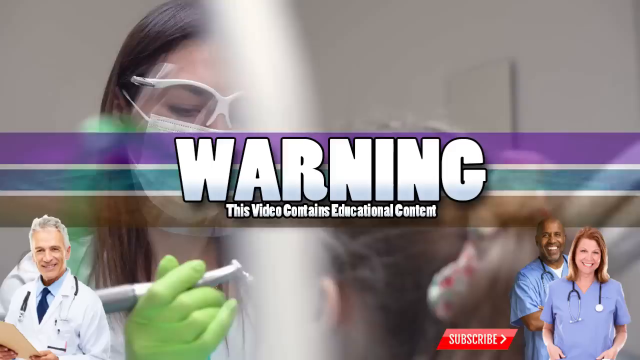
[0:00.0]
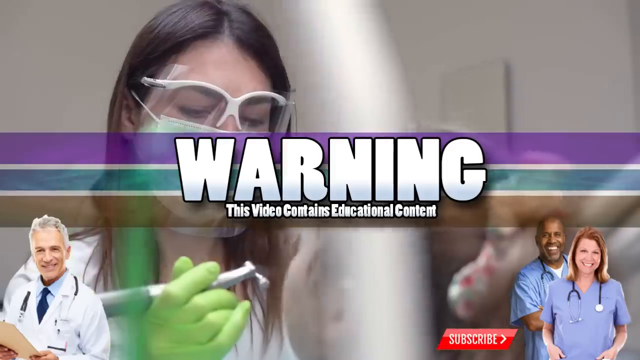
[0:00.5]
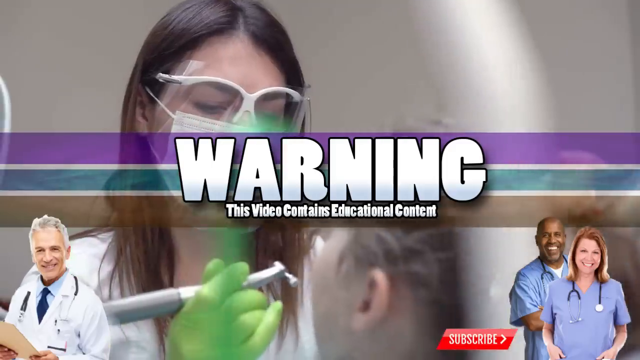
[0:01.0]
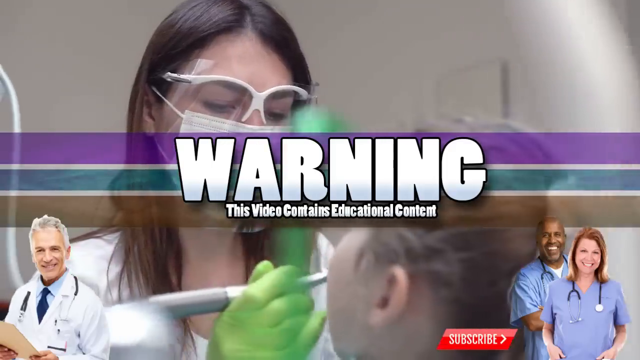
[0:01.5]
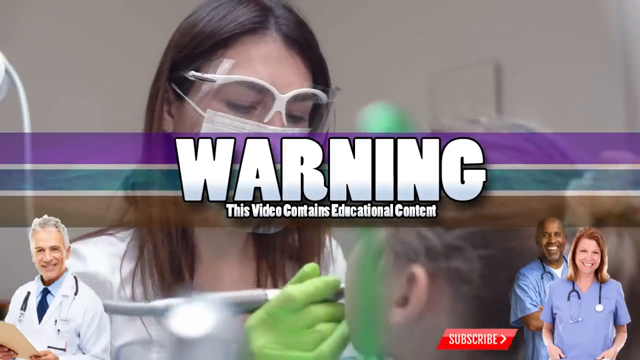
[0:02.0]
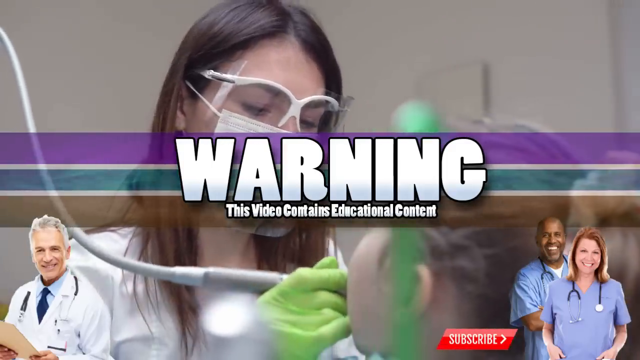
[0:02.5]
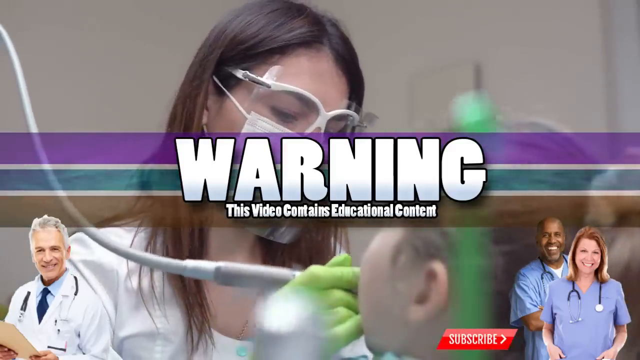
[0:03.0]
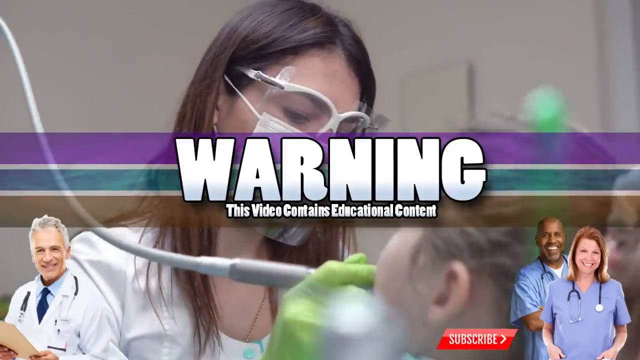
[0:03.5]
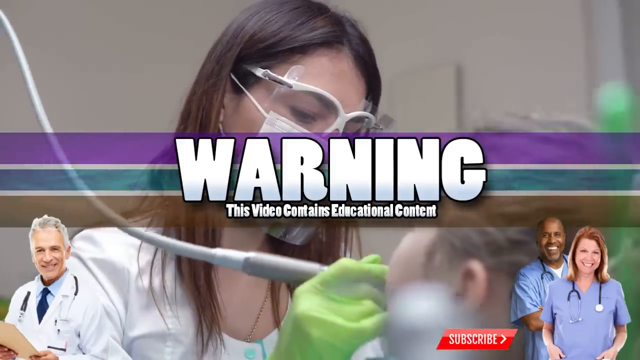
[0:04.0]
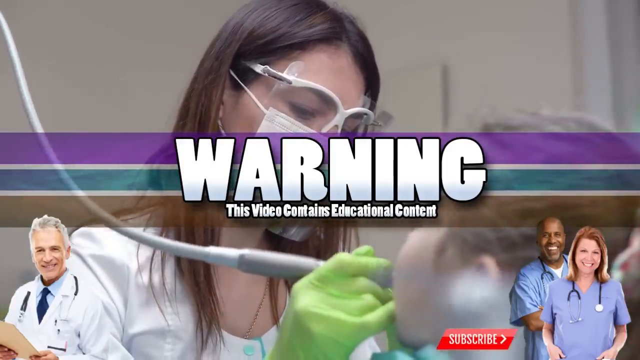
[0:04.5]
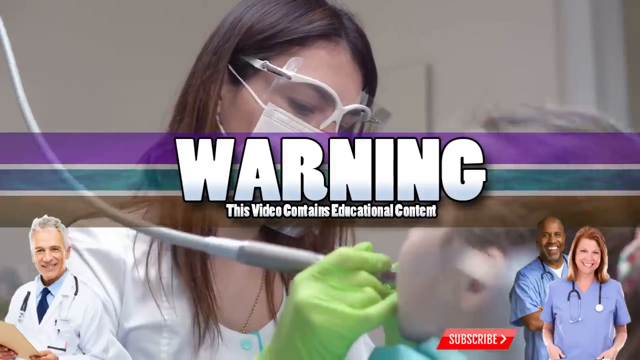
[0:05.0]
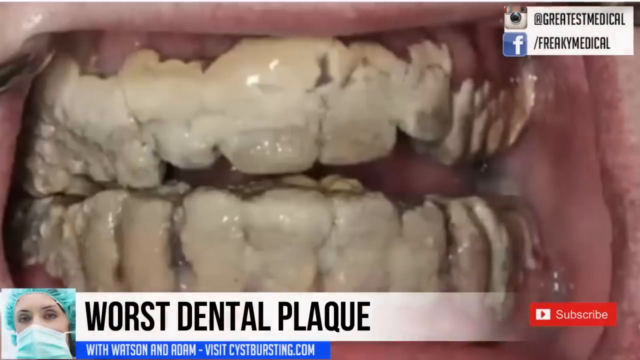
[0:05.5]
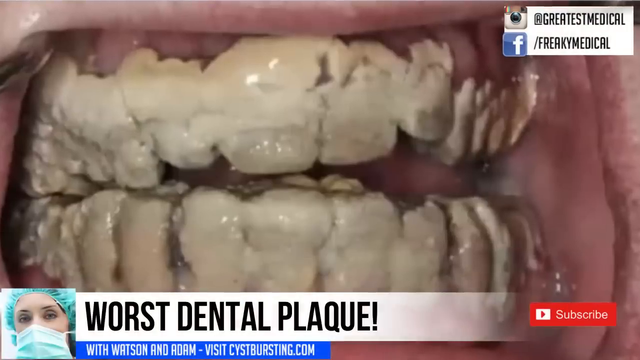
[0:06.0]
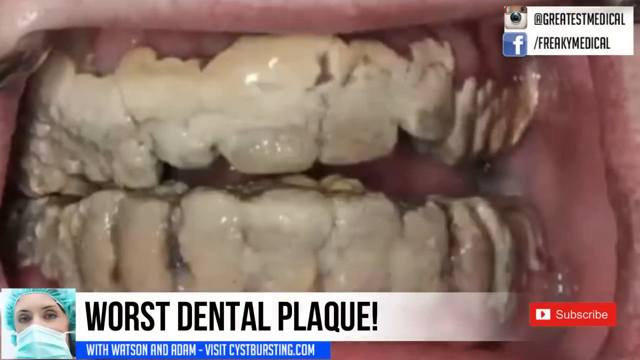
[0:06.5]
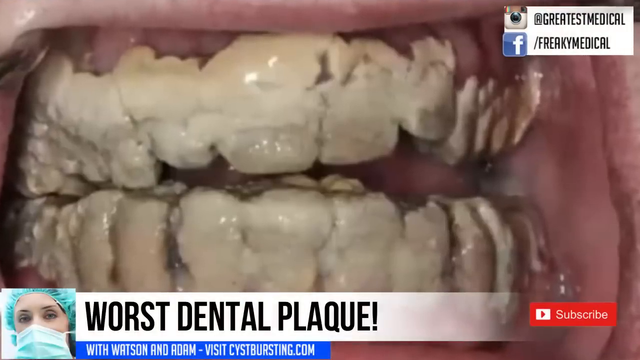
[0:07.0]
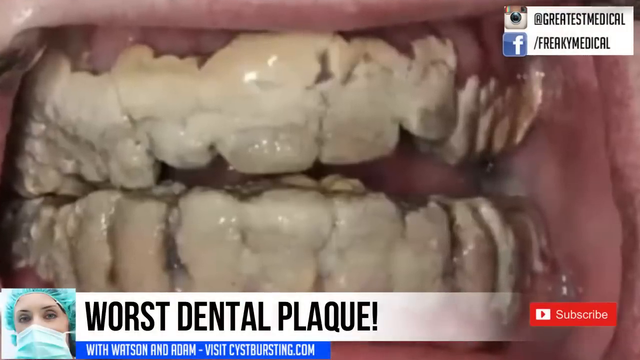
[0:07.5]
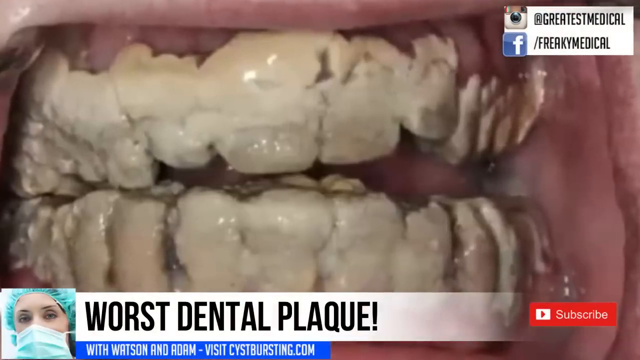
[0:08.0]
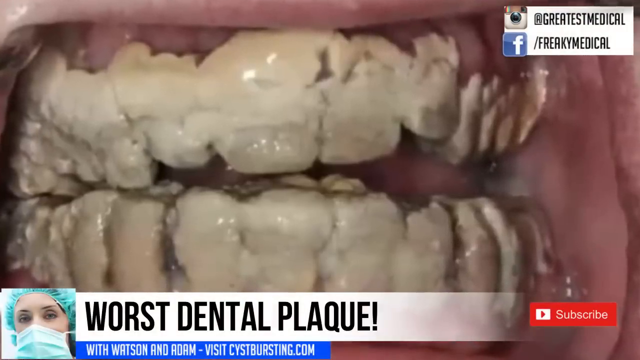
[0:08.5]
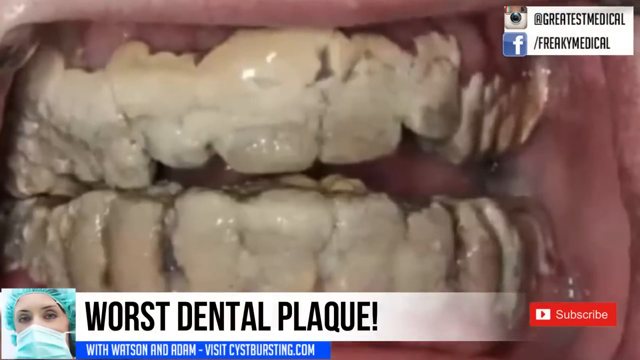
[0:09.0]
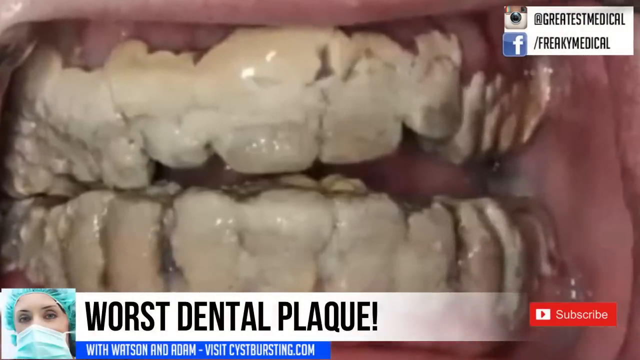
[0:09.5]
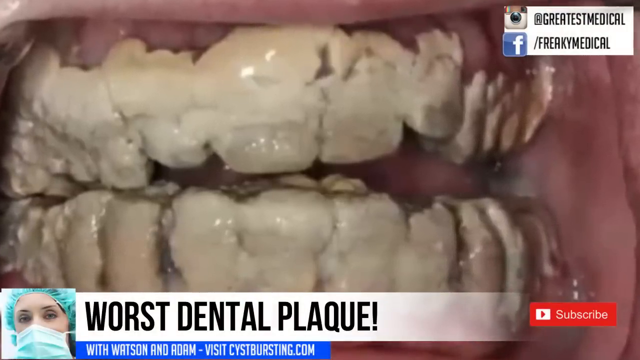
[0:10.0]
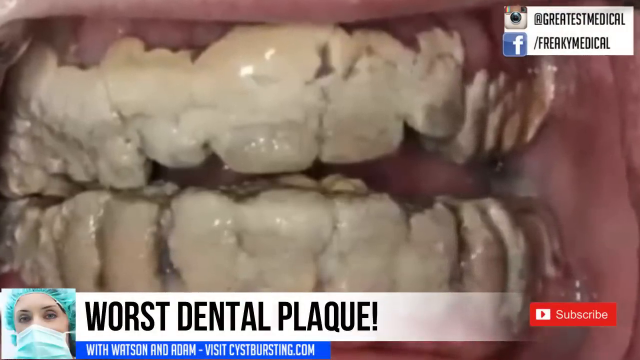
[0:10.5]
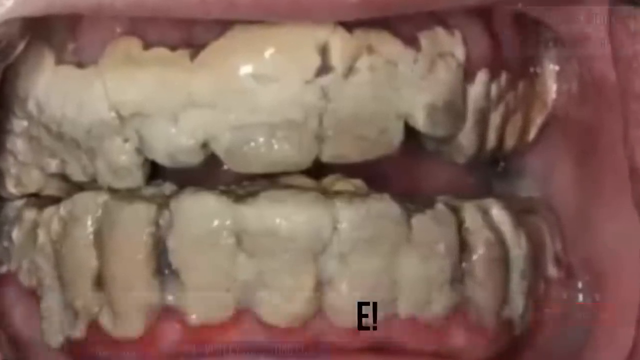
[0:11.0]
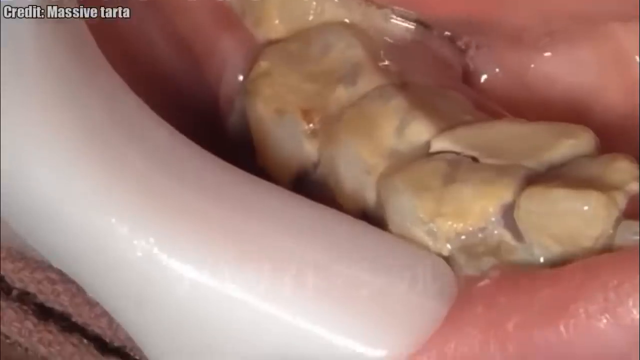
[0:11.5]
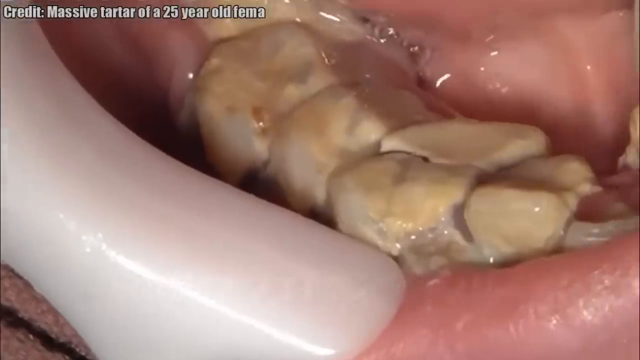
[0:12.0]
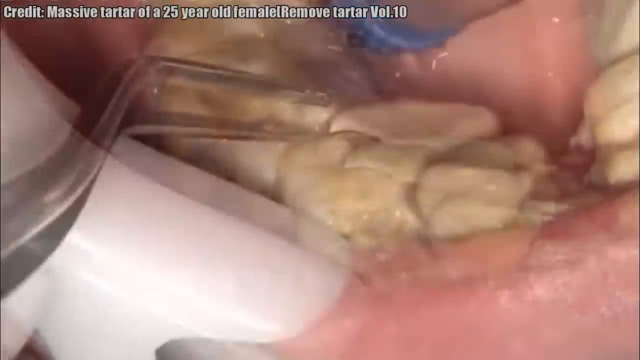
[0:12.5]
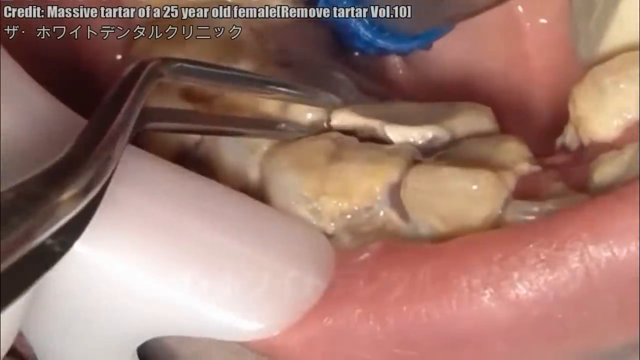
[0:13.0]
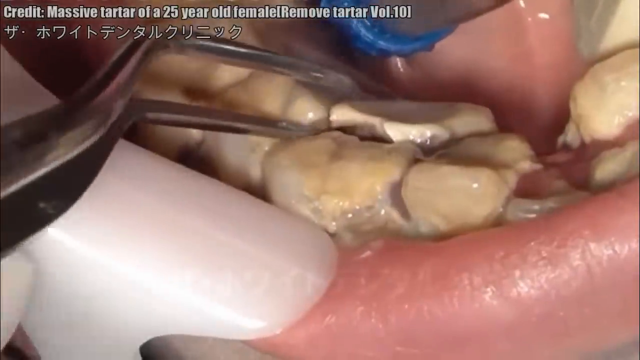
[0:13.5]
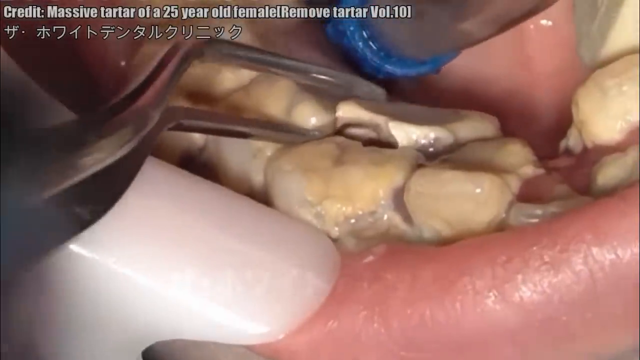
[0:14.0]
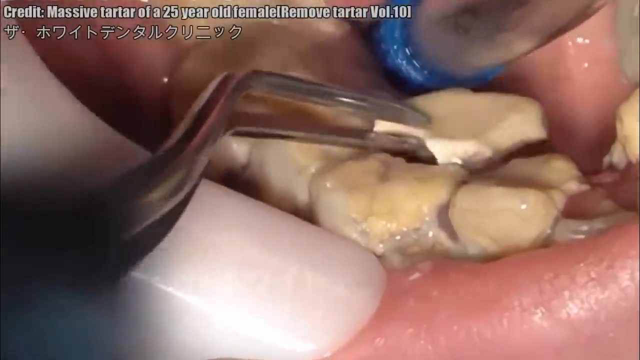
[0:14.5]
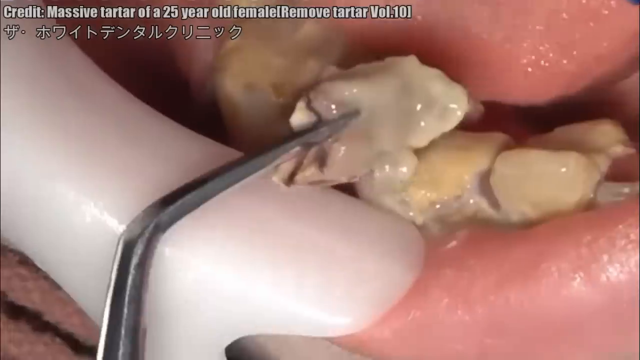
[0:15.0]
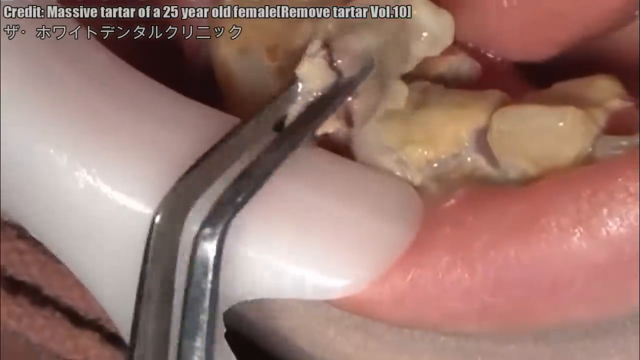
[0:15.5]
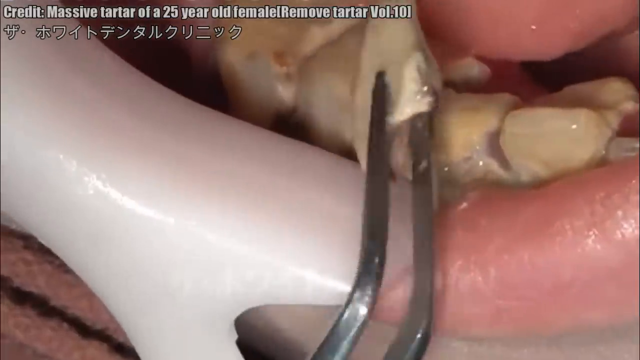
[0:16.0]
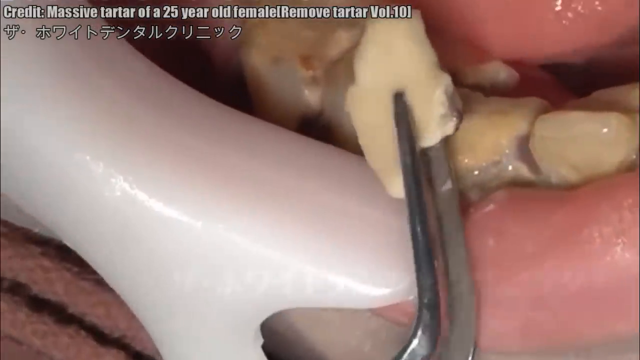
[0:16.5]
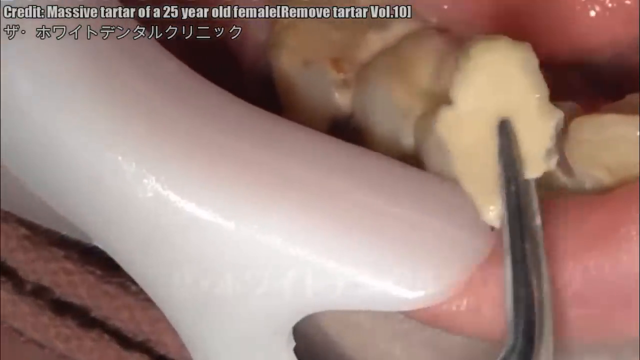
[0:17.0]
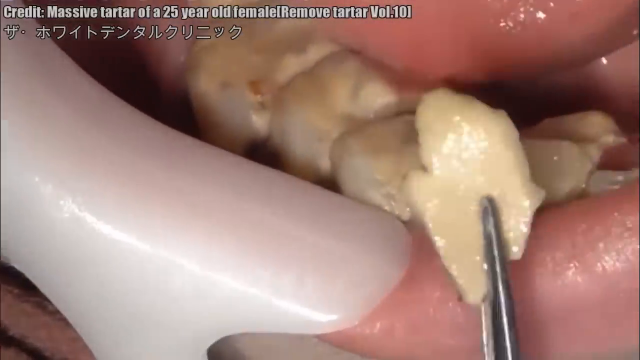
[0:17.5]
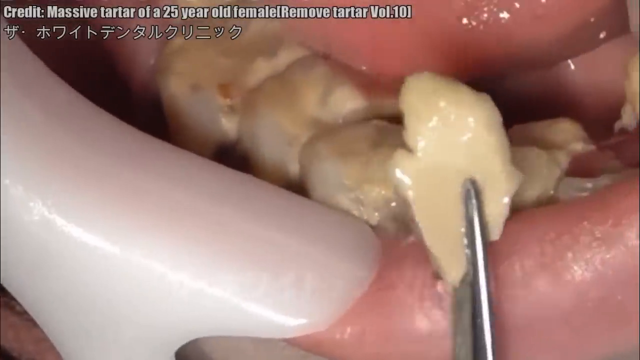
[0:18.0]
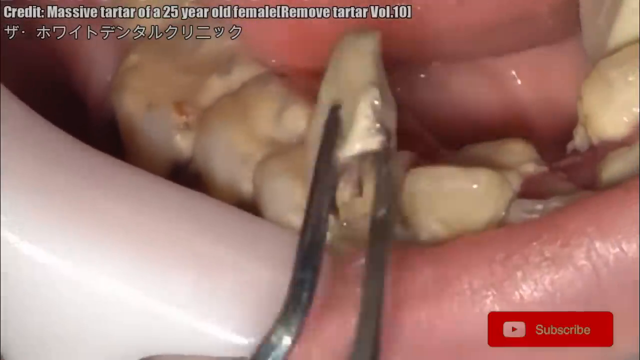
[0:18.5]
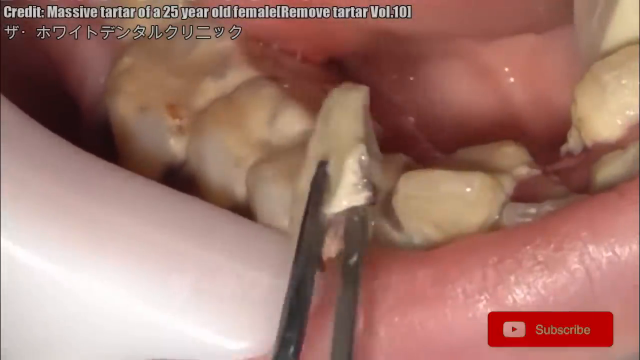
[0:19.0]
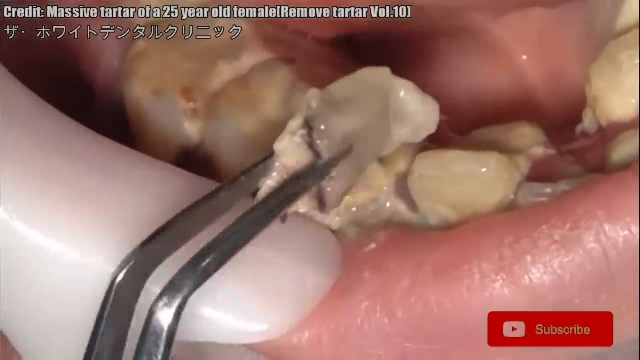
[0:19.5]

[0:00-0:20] A banner moves across an image of a woman holding a metal tool. She wears protective equipment, including a mask, gloves, a face shield and glasses, and the gloves are green. The banner is a translucent purple, blue and brown bar. Text at the top of the screen reads "warning, this video contains educational content." Two pictures of other medical professionals appear at the bottom of the screen, along with a YouTube subscribe button. The woman uses a long metal tool to clean the inside of a person's mouth. Next comes a picture of a person's mouth held open by metal prongs, the teeth coated with a lot of tartar or a similar substance. Instagram and Facebook icons appear at the top right with social media information, along with a banner that says "worst dental plaque."